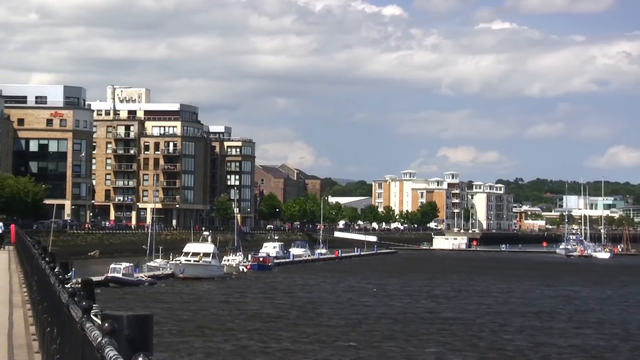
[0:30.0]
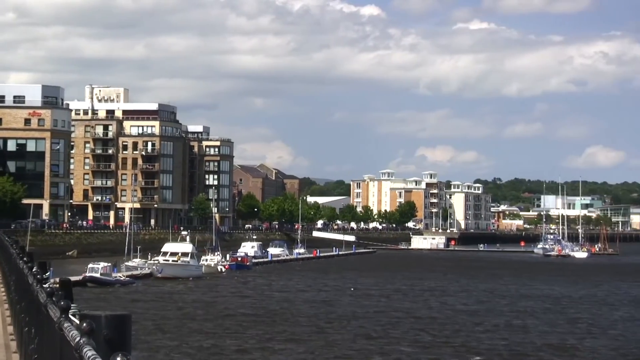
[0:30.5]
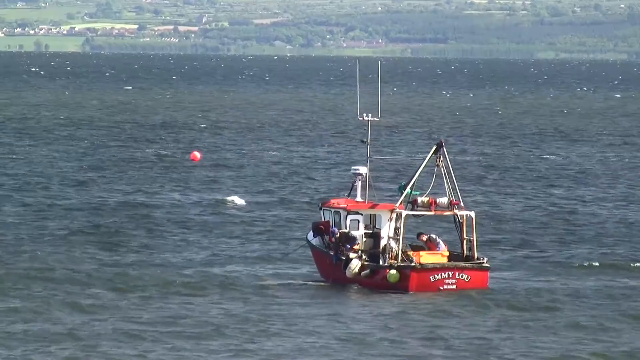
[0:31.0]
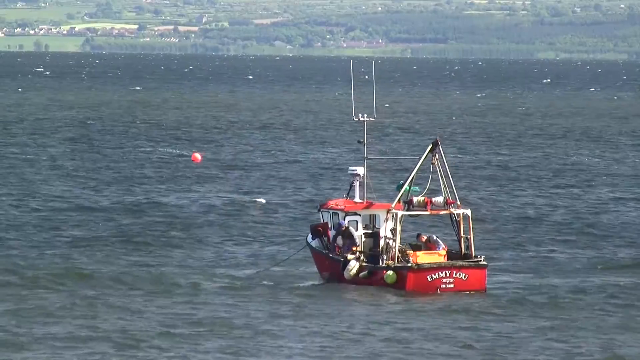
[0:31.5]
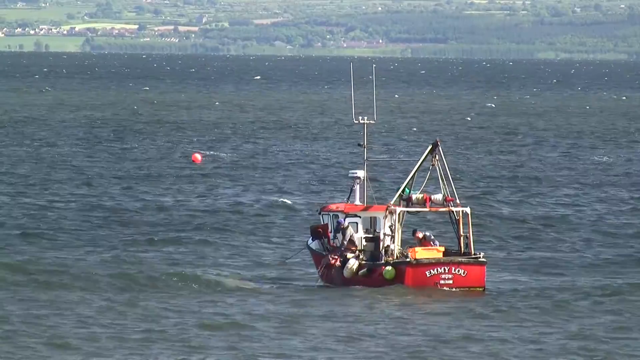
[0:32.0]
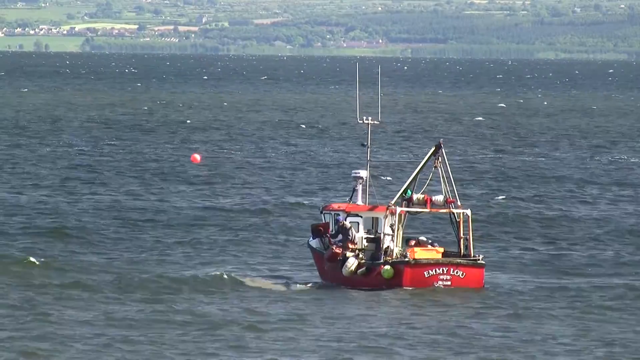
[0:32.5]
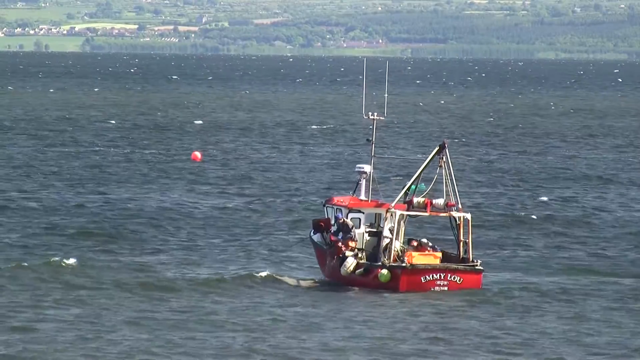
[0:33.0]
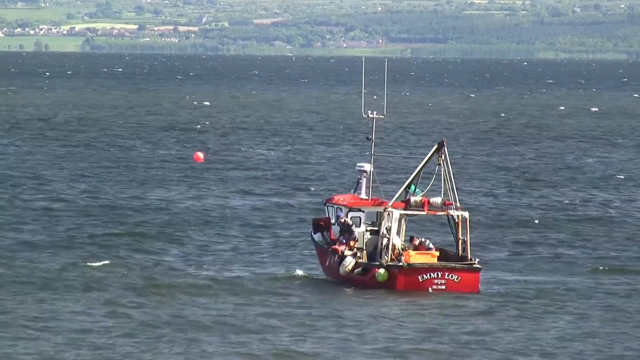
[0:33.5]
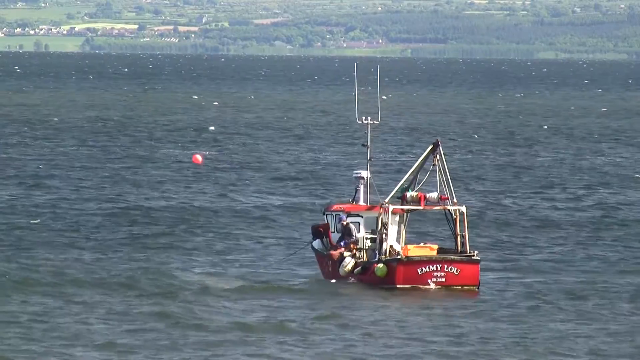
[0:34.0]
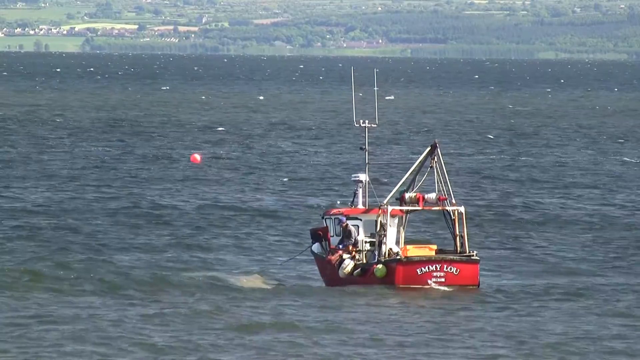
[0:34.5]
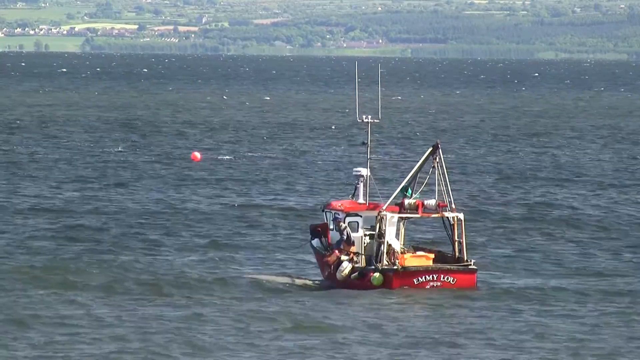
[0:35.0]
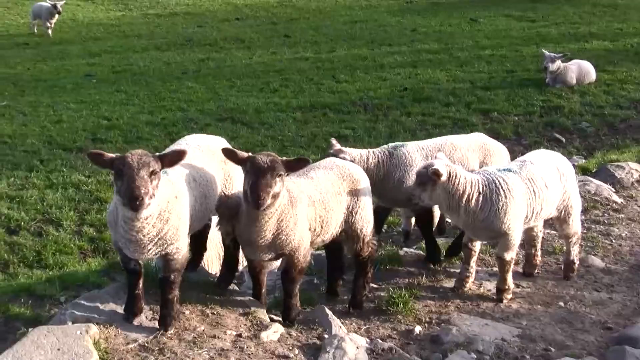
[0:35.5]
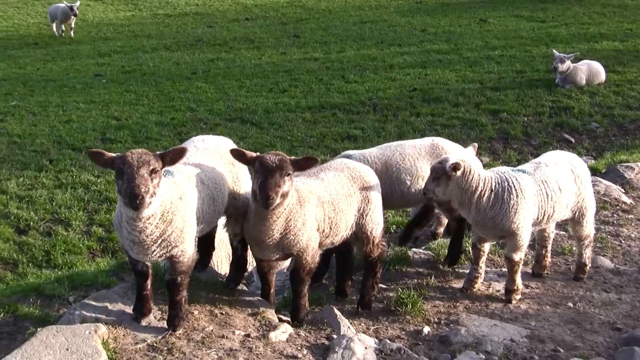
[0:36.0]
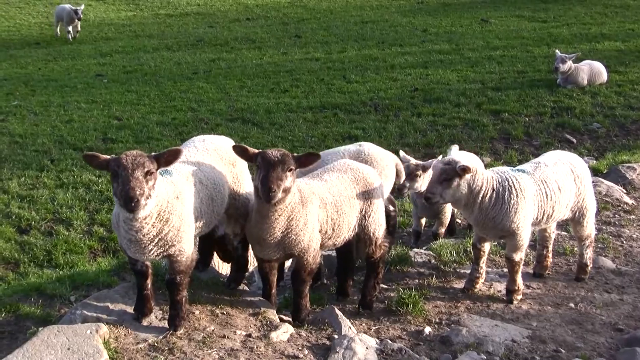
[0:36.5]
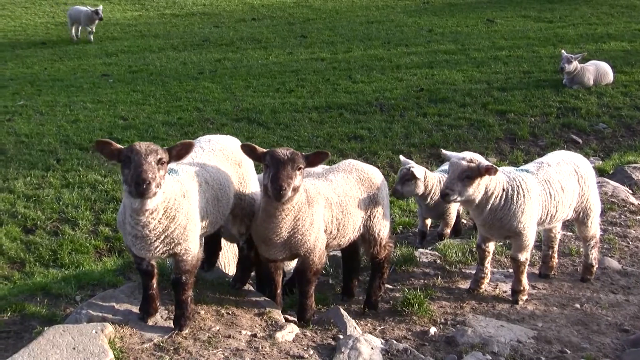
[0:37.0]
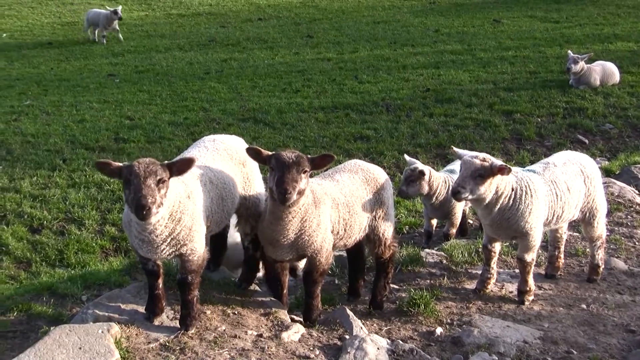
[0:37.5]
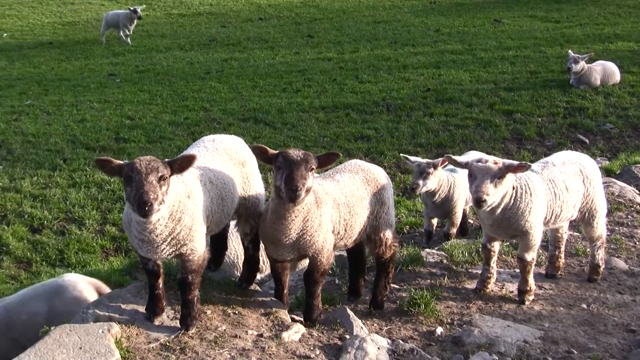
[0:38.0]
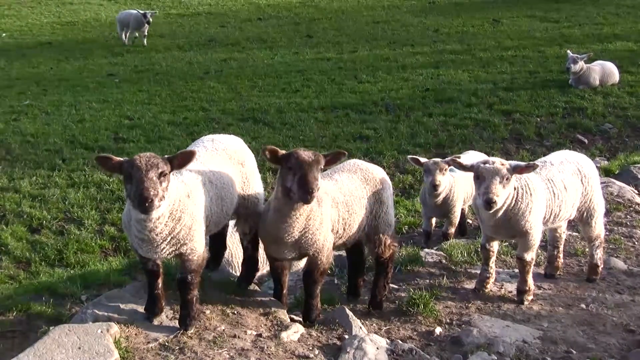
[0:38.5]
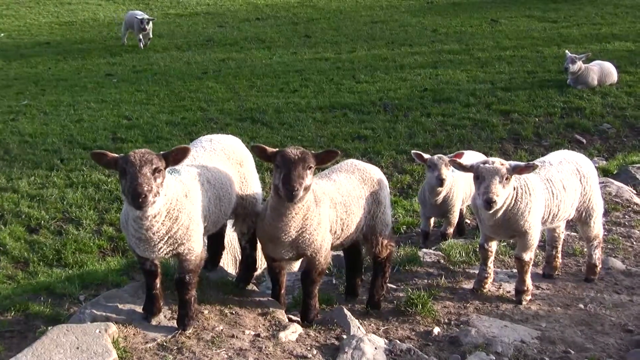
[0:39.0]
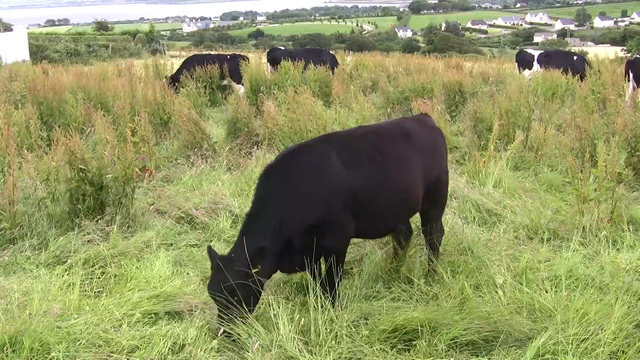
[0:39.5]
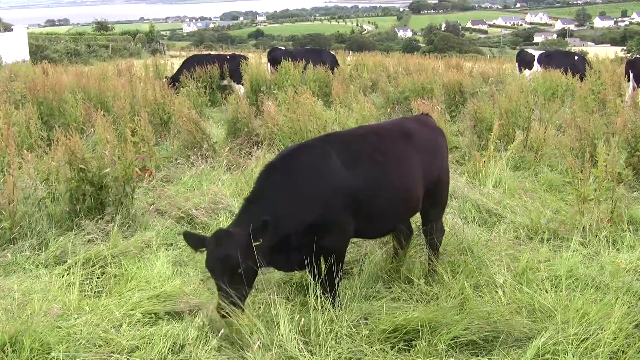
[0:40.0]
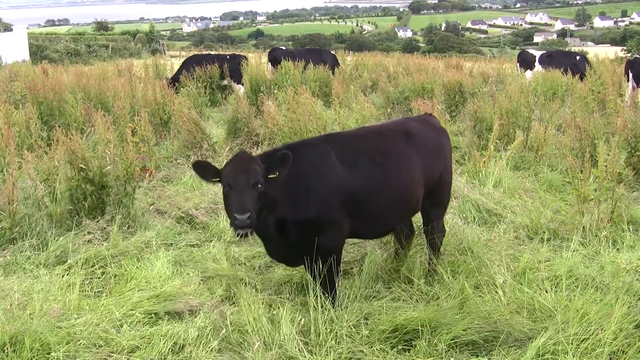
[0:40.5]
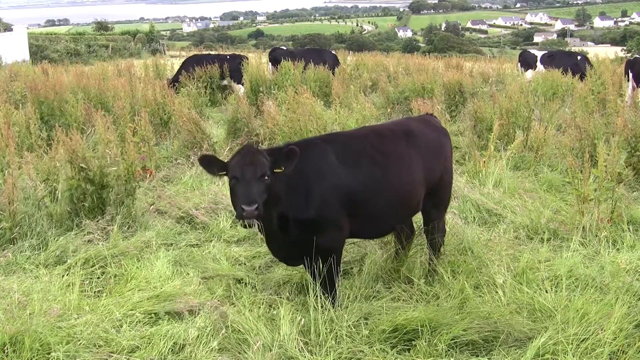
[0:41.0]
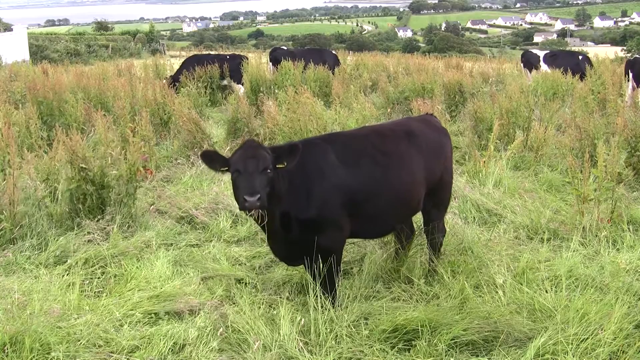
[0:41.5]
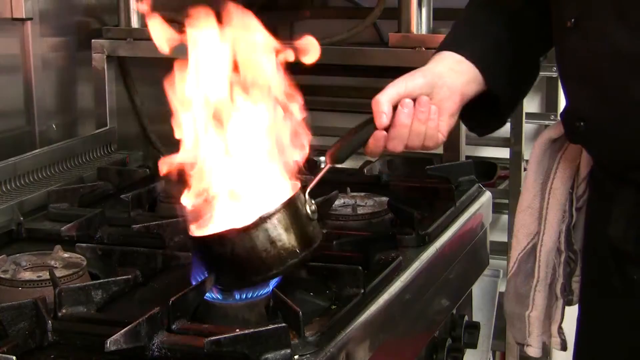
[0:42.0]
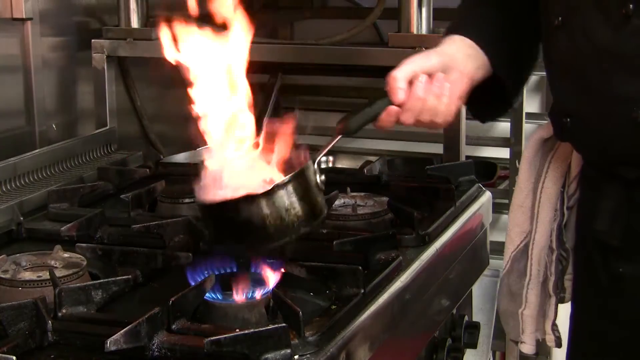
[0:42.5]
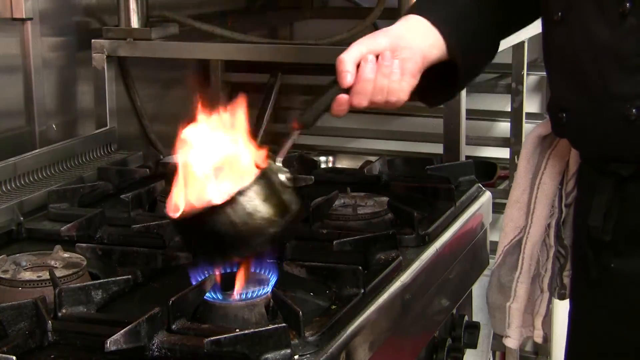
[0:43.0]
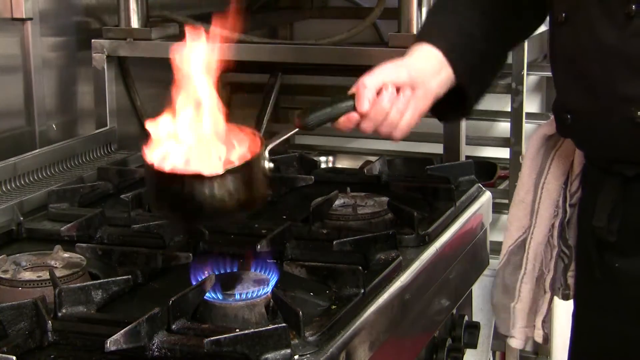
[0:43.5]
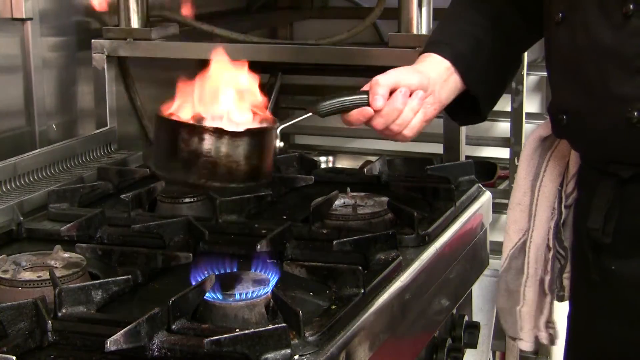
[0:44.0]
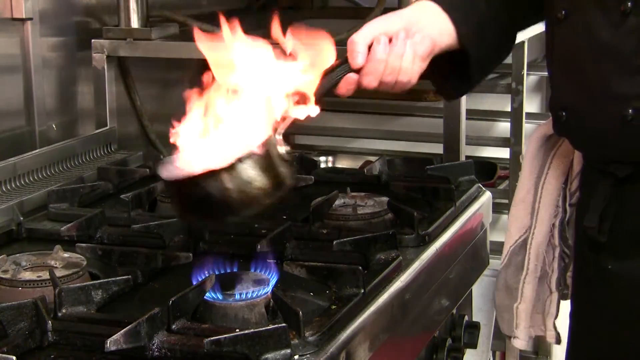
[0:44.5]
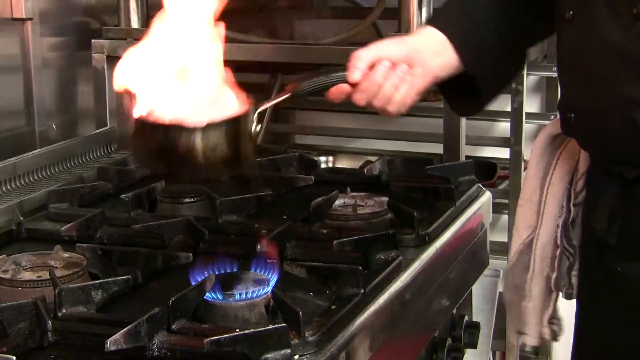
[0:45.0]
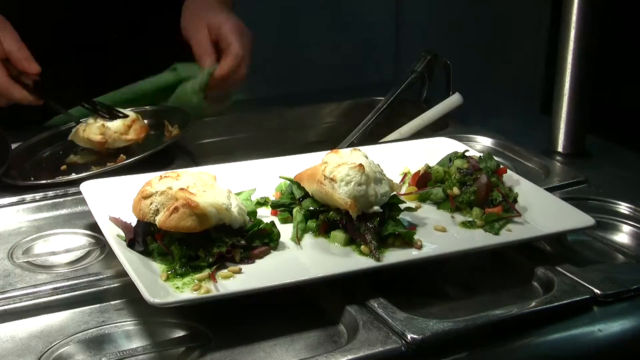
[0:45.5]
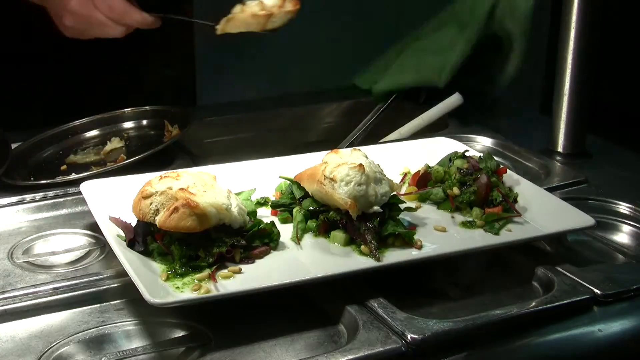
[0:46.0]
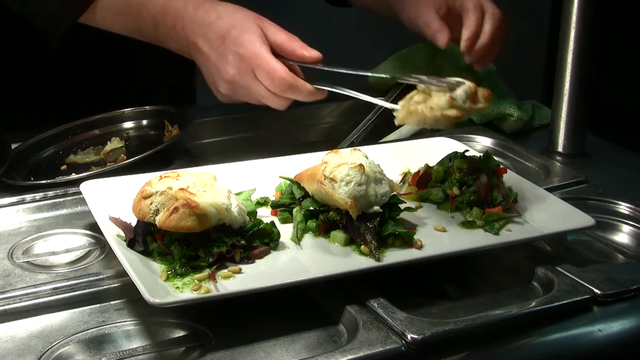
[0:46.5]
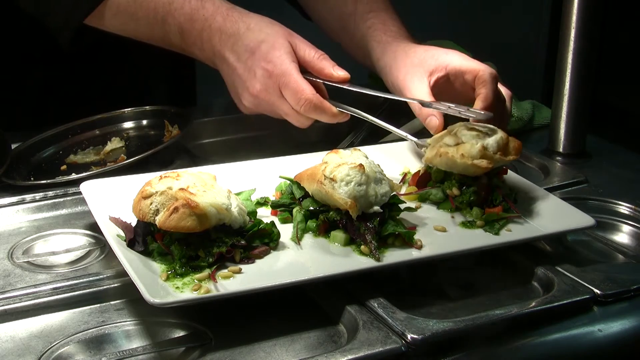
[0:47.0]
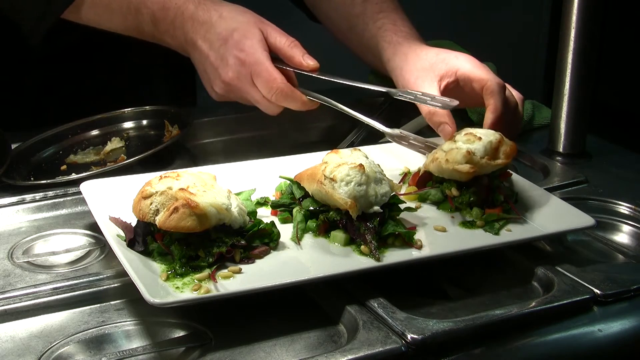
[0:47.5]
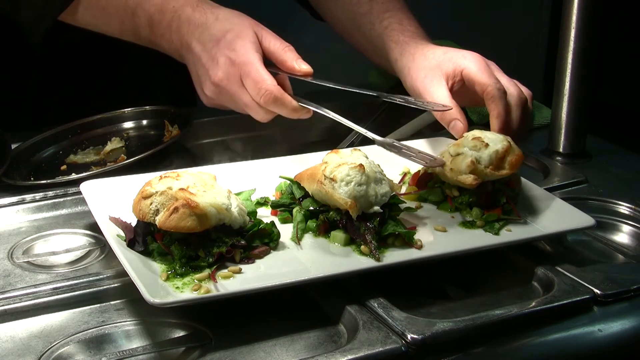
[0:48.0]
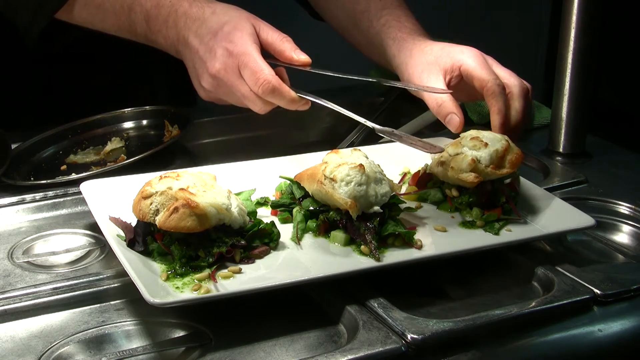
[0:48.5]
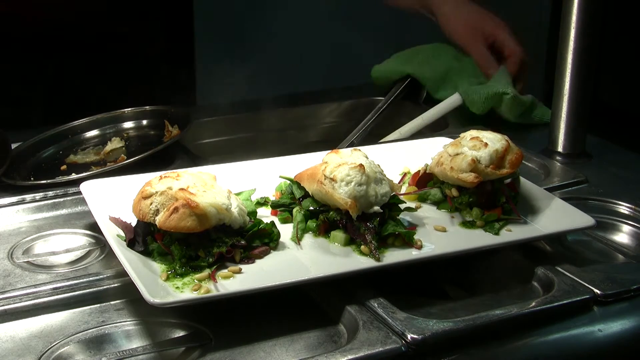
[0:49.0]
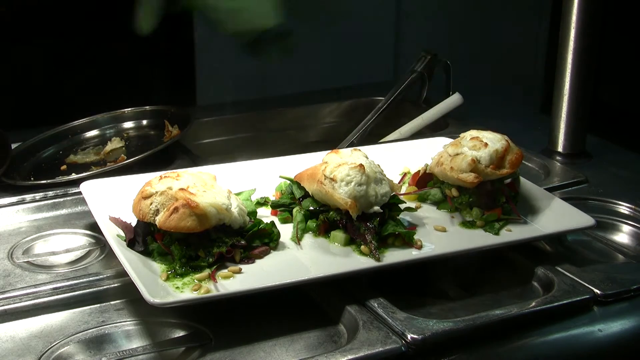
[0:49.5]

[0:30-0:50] The downtown harbor view continues, then the camera zooms in on a boat, some sort of fishing or possibly emergency boat. The boat is called the Emmylou; it is red and smaller, with an antenna attached to it. Someone is leaning over the side, and the boat is bobbing in the water. Next is wildlife: eight sheep on grass, four or five in the foreground and some in the background, looking at the camera. The video cuts to cows, with one in the foreground eating grass. Then someone cooks with fire in a pan in a kitchen, followed by three servings of chicken being plated on a bed of veggies.